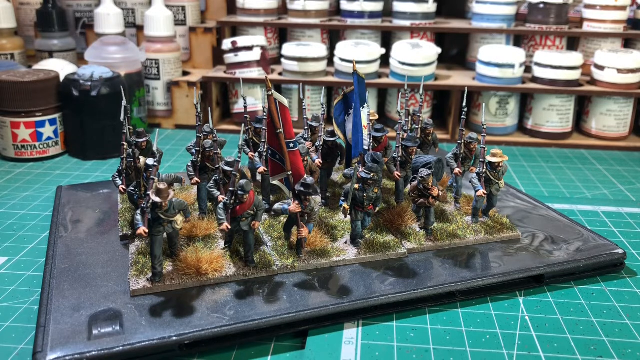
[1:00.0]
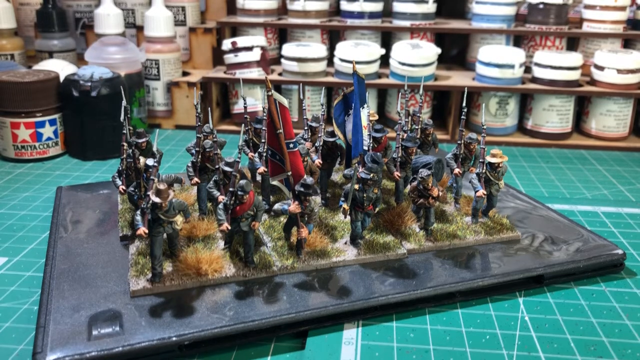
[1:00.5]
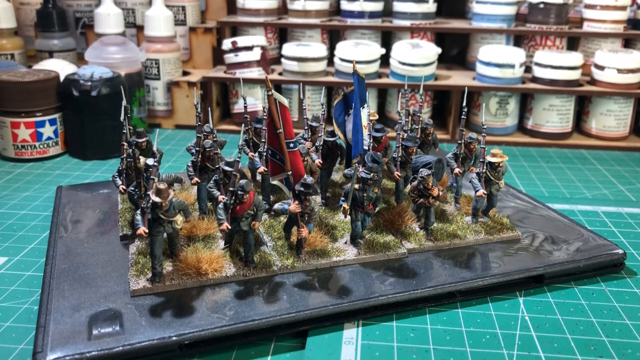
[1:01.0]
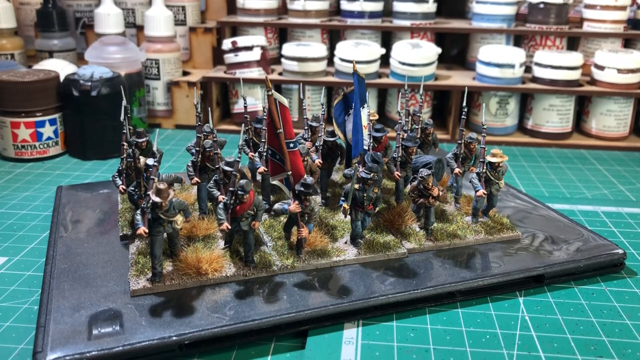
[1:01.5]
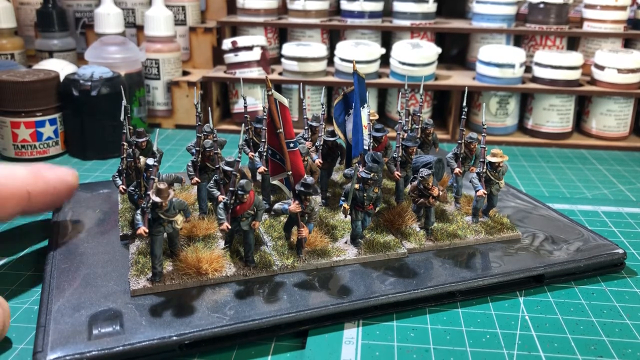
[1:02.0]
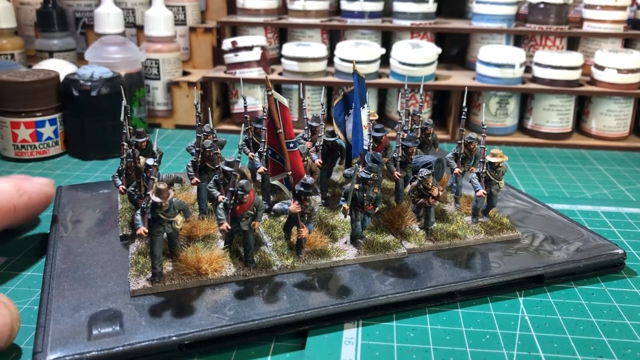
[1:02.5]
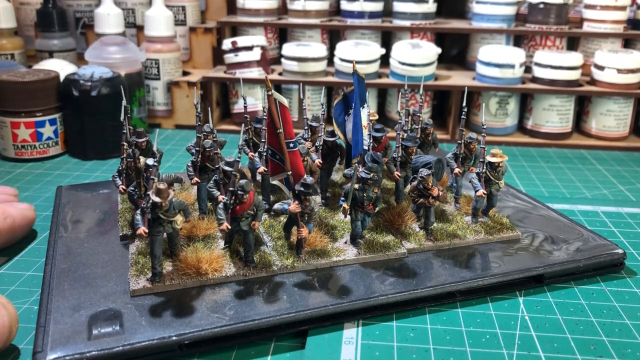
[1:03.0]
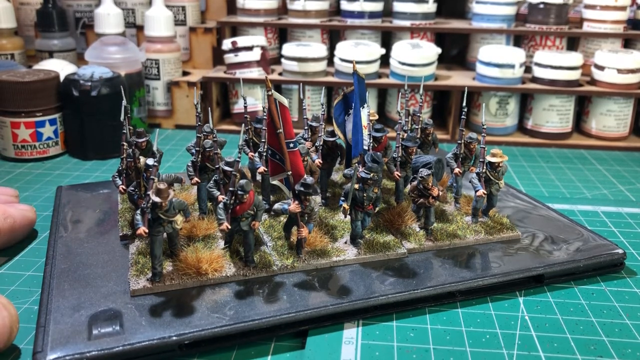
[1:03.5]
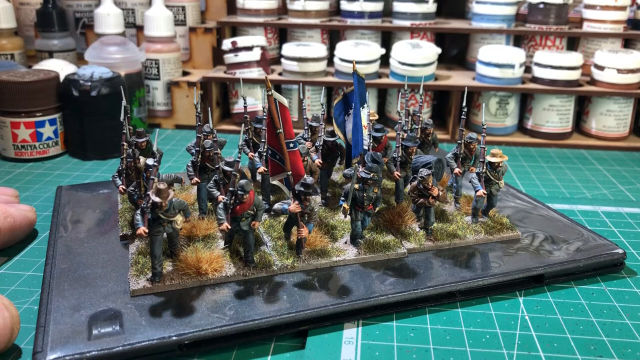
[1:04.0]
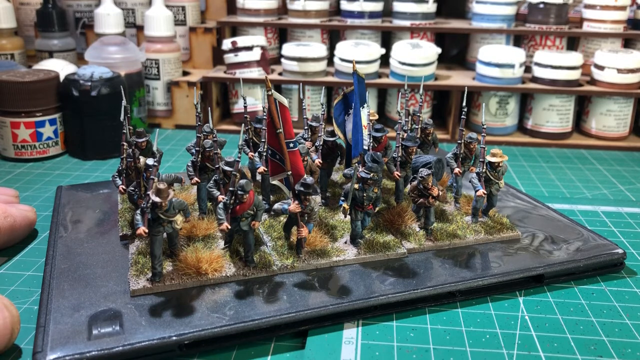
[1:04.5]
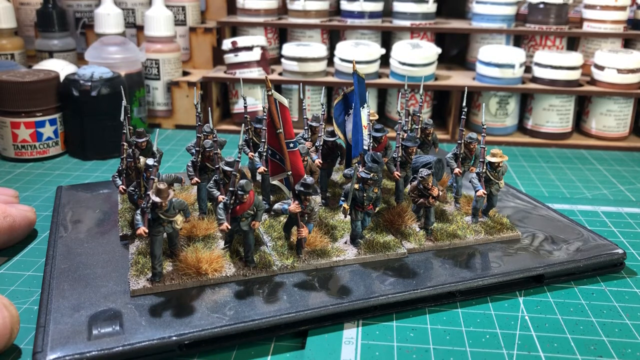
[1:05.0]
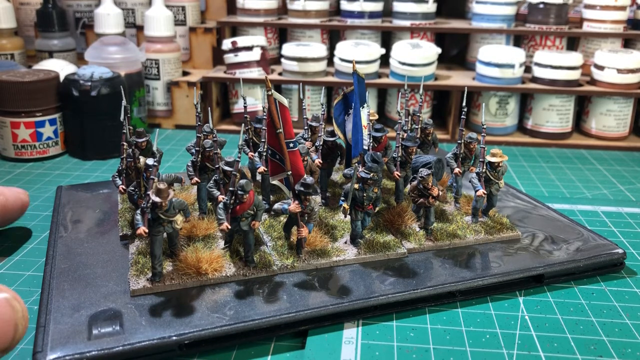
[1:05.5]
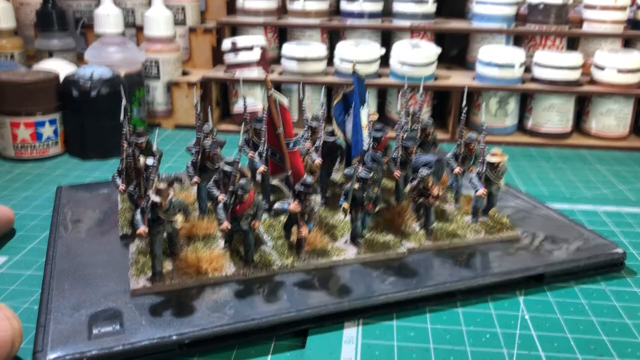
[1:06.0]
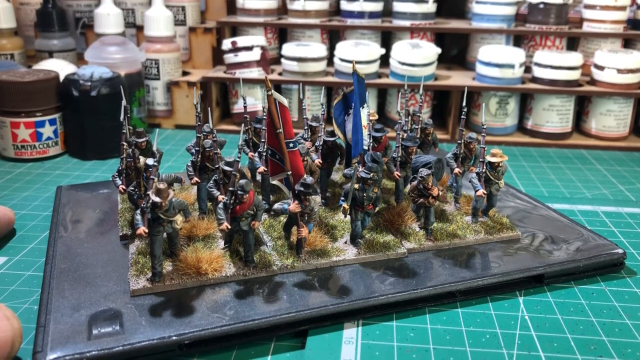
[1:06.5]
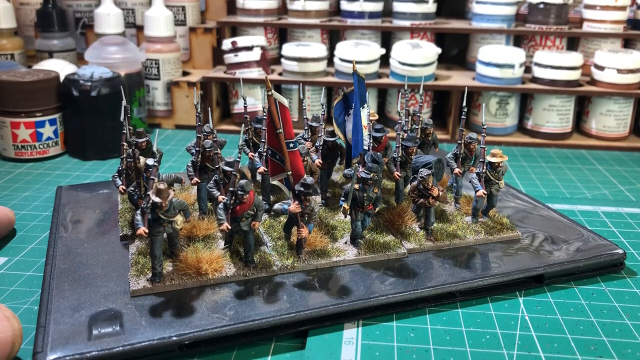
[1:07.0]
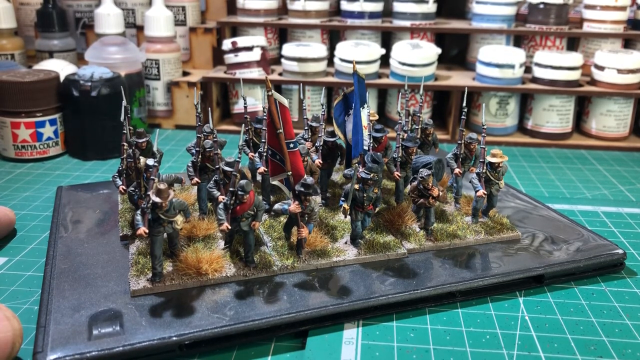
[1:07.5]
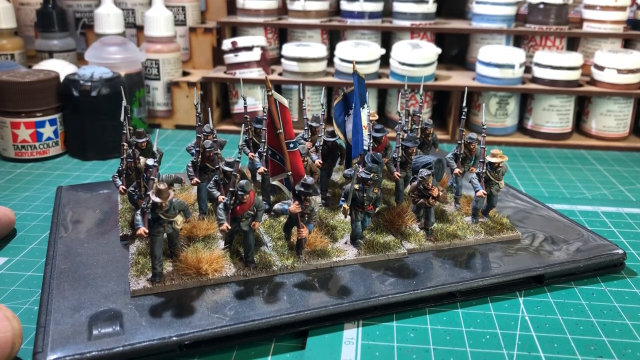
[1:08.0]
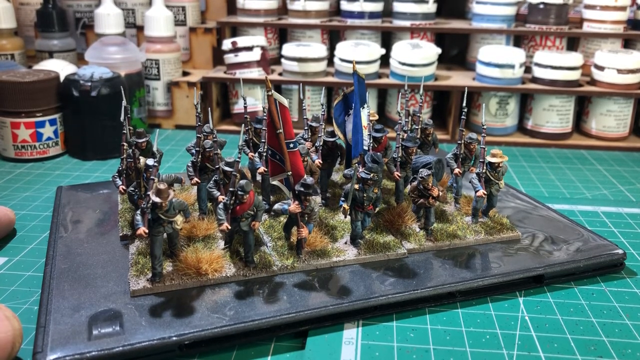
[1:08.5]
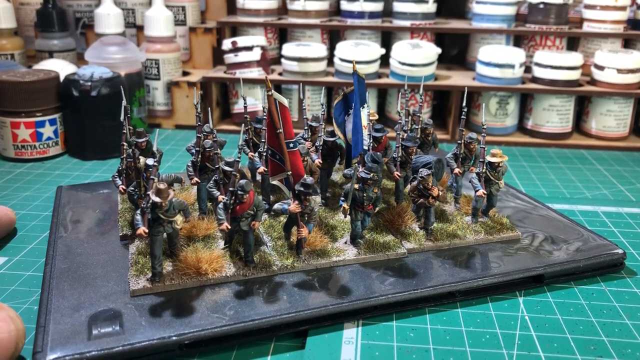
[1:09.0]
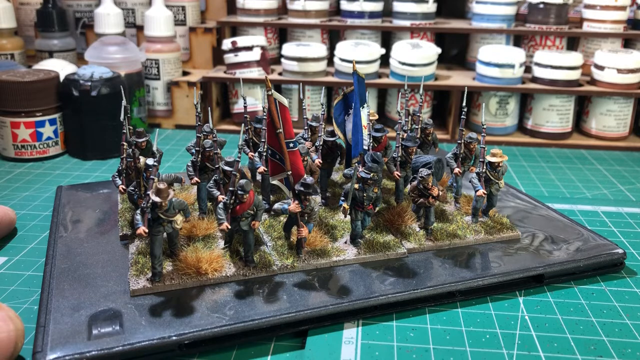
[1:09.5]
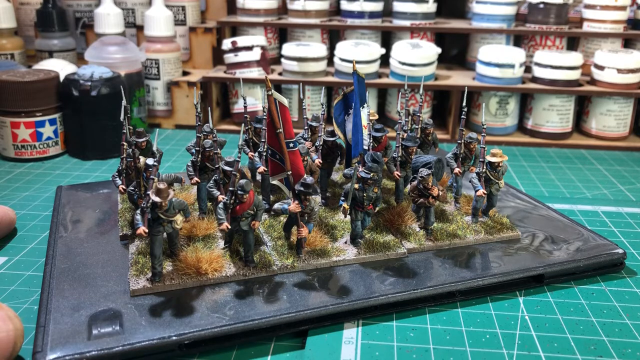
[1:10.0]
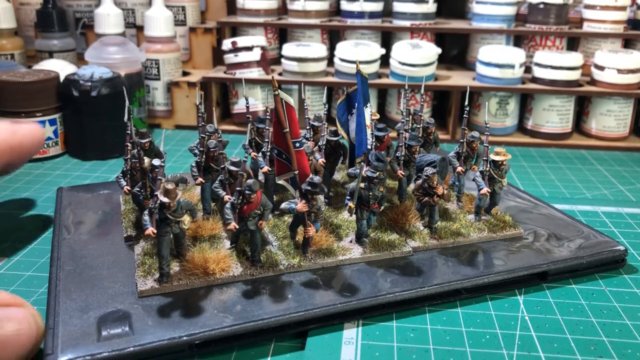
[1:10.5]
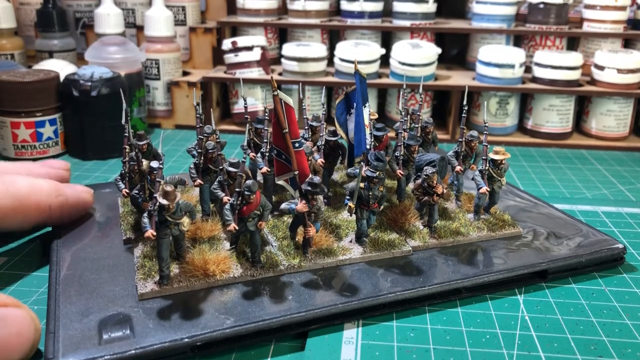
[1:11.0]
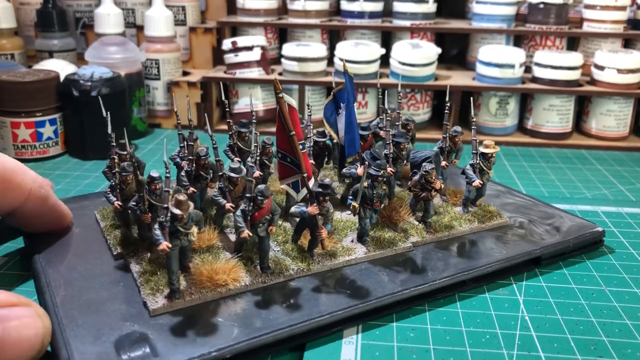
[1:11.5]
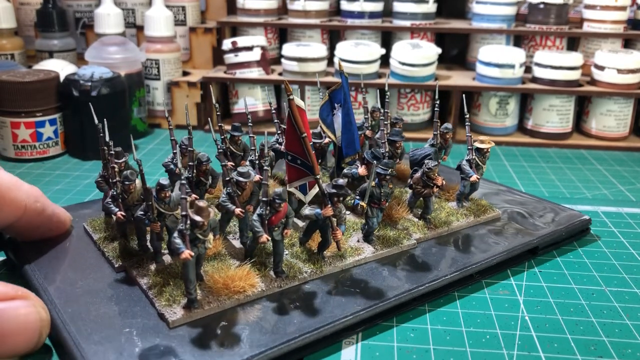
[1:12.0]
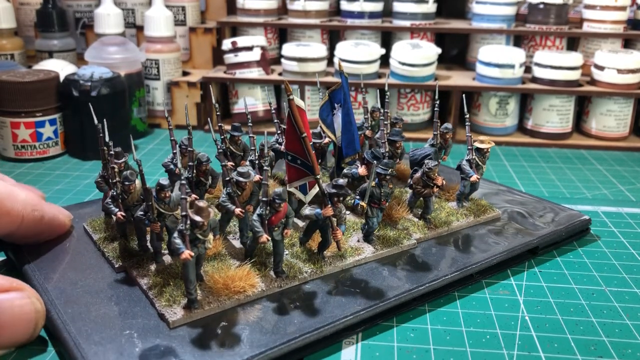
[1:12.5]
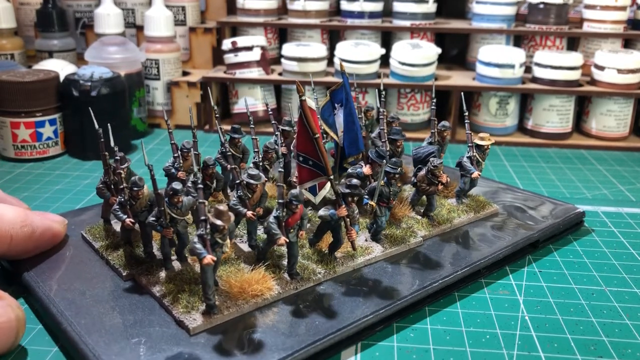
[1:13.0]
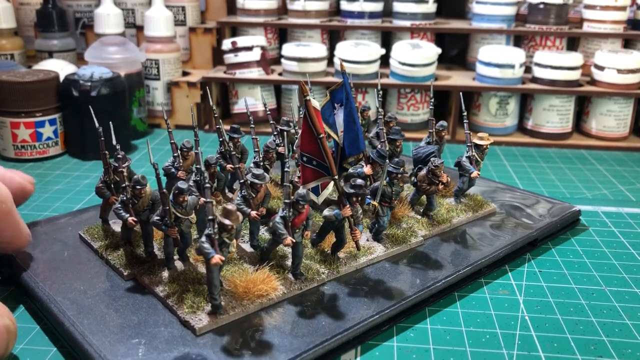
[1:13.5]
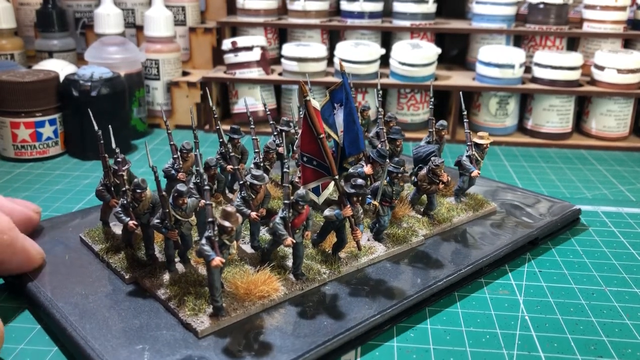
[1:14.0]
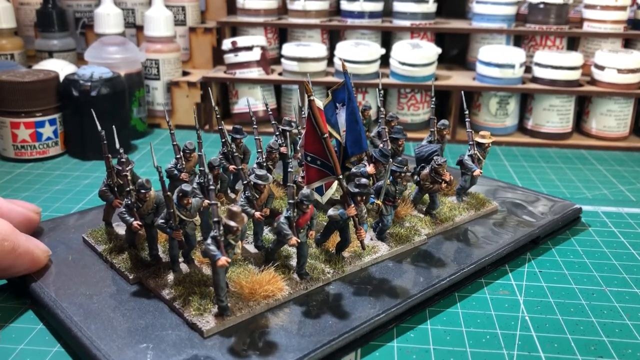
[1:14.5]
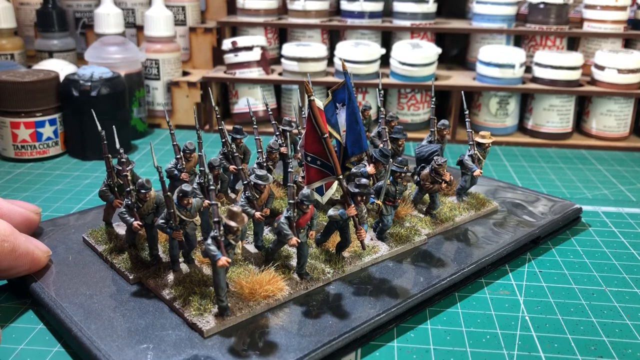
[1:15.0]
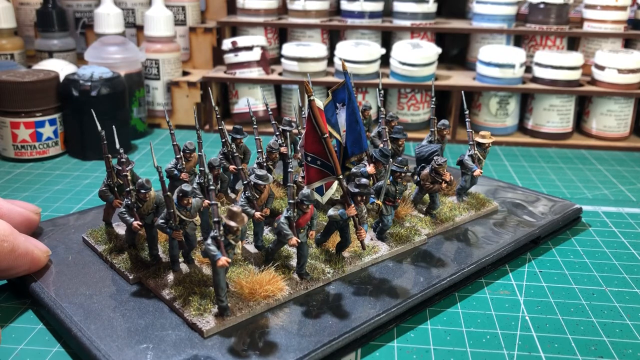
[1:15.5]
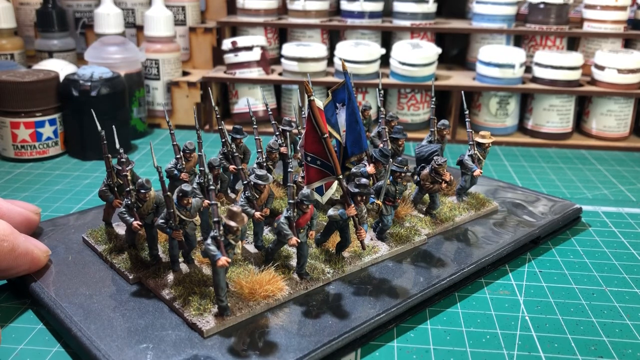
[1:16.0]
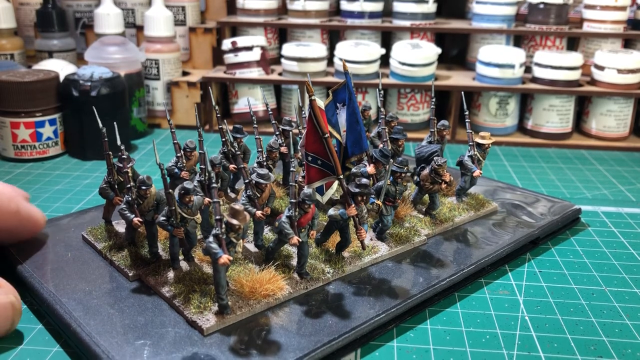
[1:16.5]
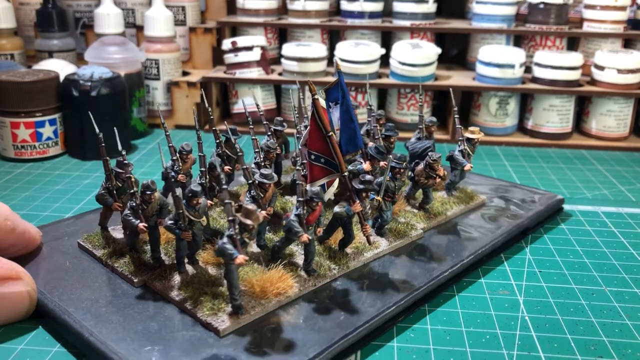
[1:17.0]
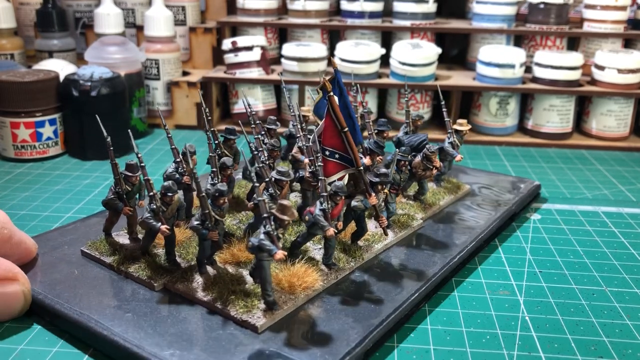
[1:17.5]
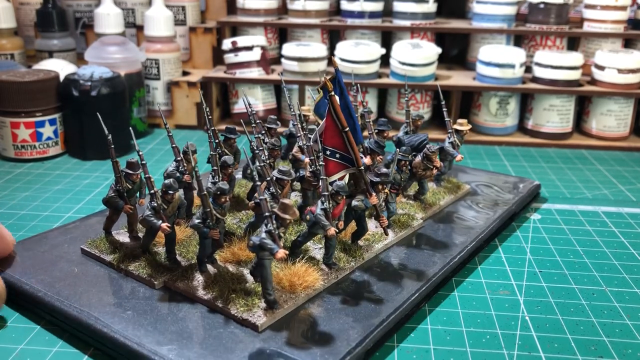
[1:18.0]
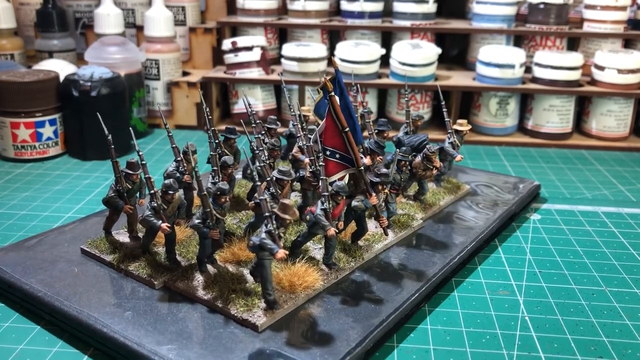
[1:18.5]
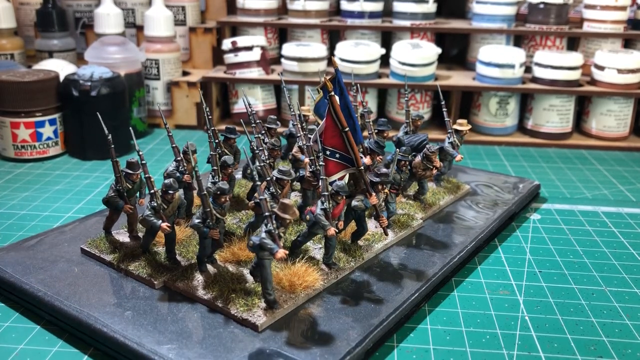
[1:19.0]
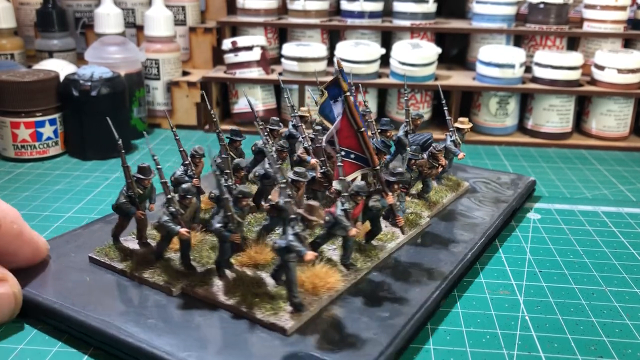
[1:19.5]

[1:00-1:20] A human hand, possibly a male hand, appears on the left-hand side of the figures, and the image is no longer static. The hand moves the figurines, turning them from one side to the other, giving the camera a greater vantage point and showing more of the scene. The figures look well presented and look like they are from war. The hand is possibly that of the person who created the figures.